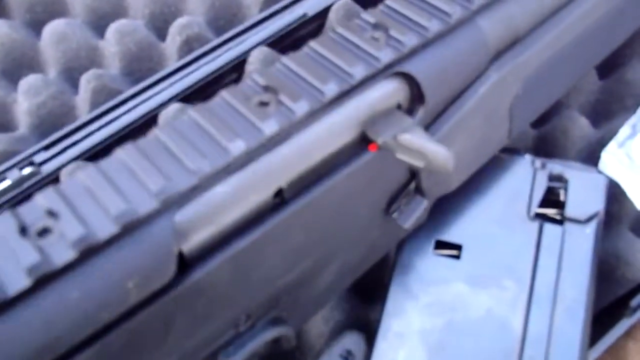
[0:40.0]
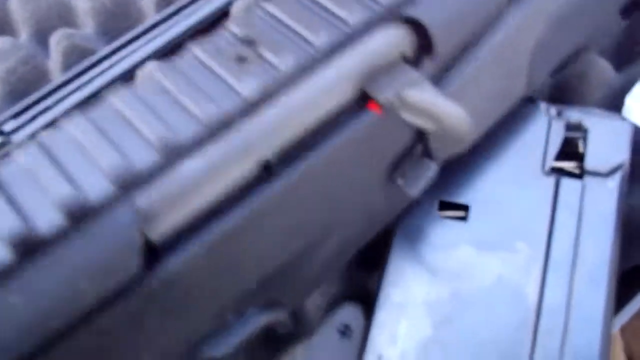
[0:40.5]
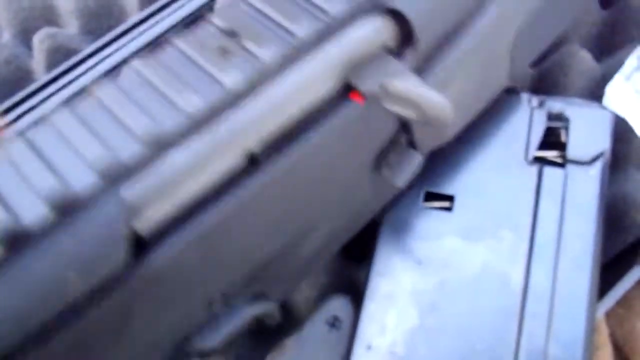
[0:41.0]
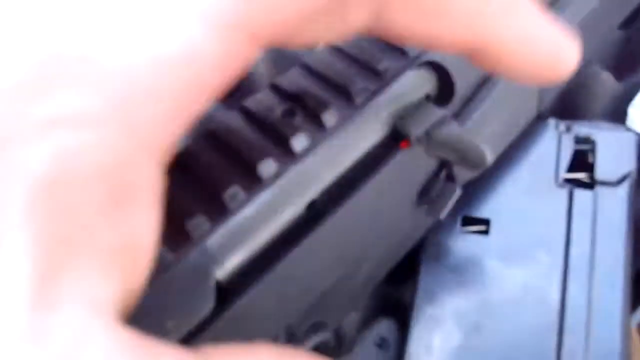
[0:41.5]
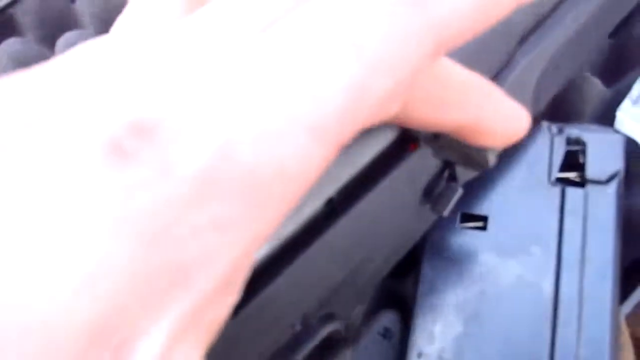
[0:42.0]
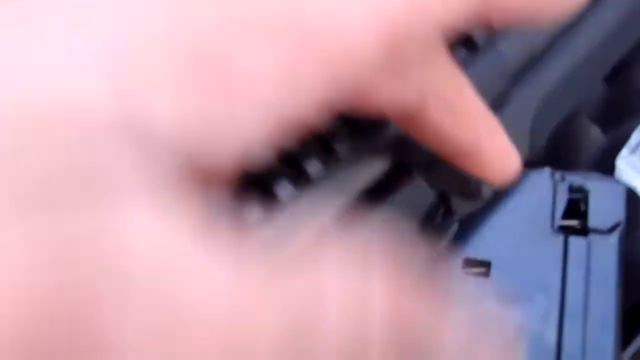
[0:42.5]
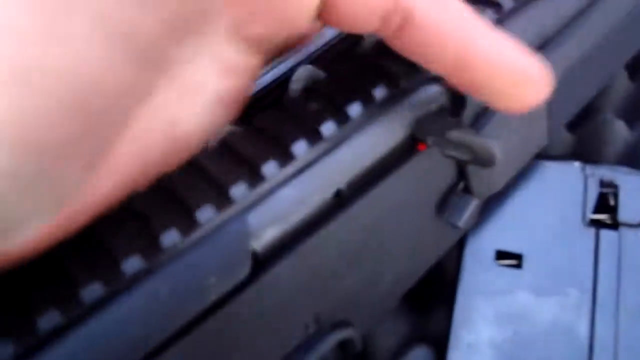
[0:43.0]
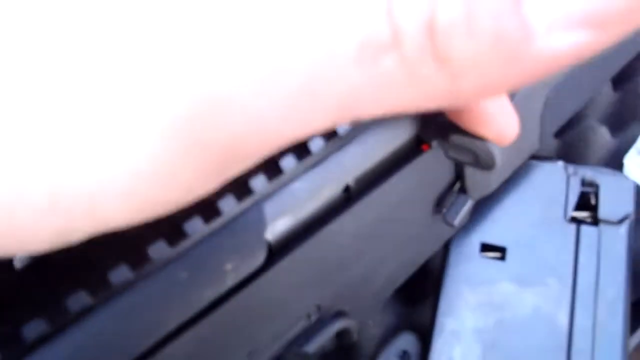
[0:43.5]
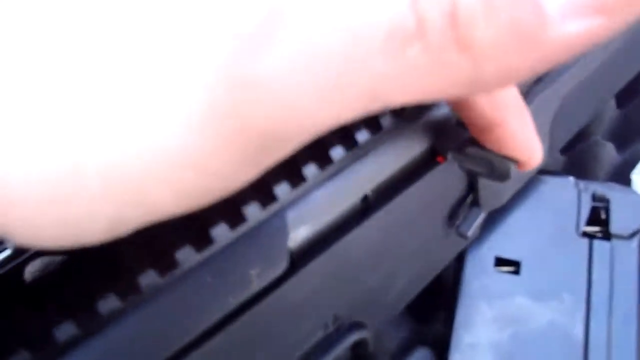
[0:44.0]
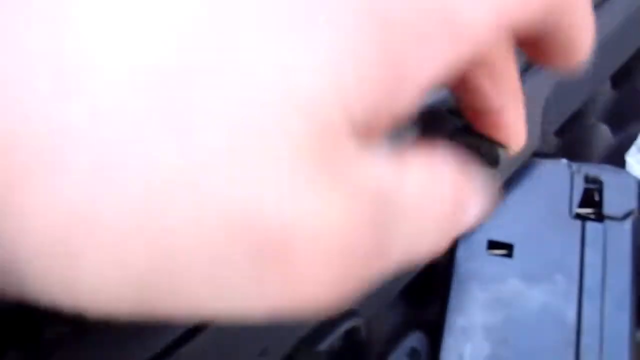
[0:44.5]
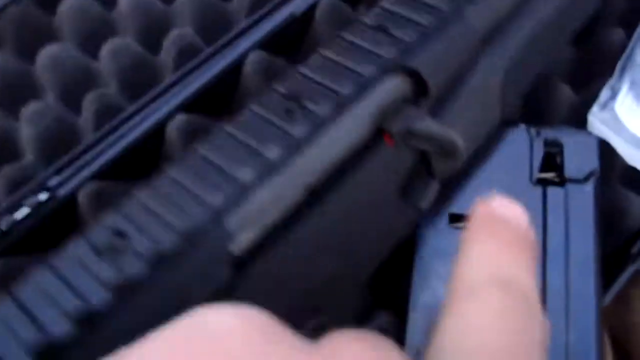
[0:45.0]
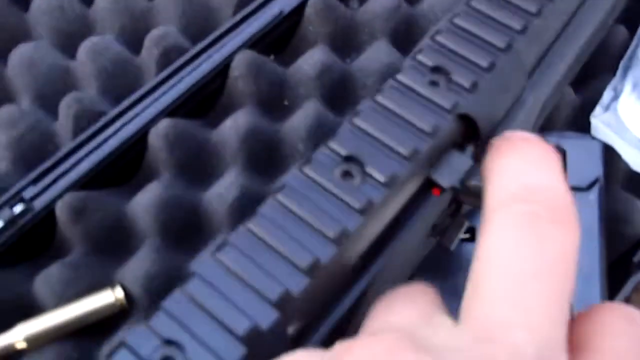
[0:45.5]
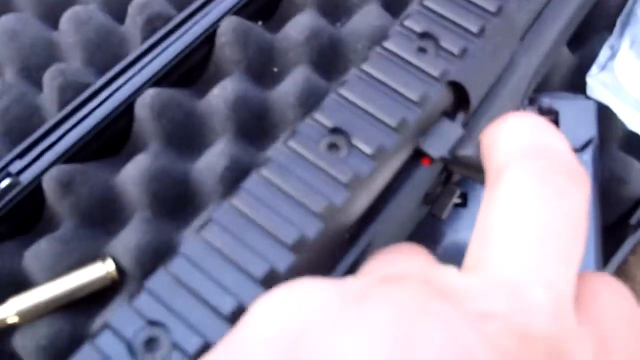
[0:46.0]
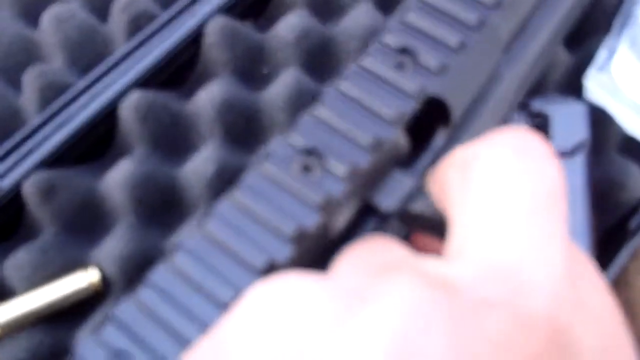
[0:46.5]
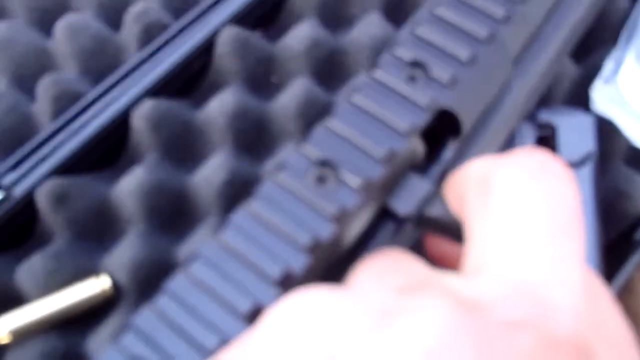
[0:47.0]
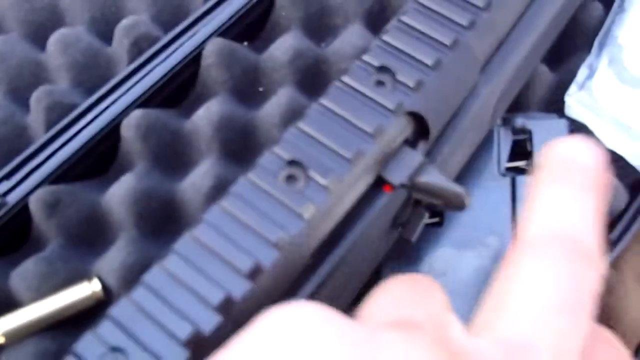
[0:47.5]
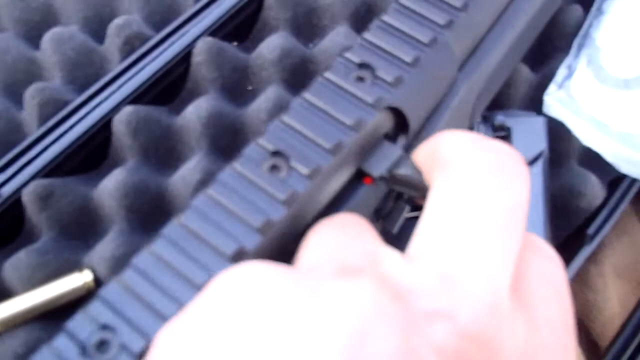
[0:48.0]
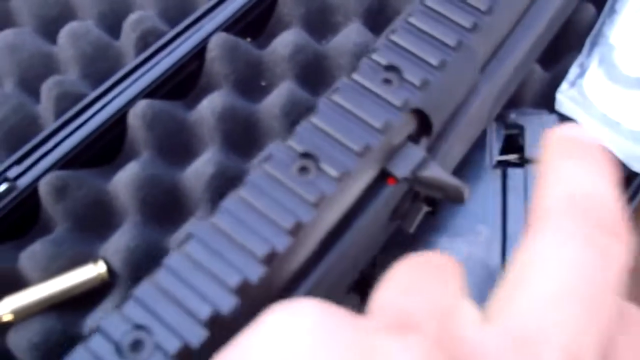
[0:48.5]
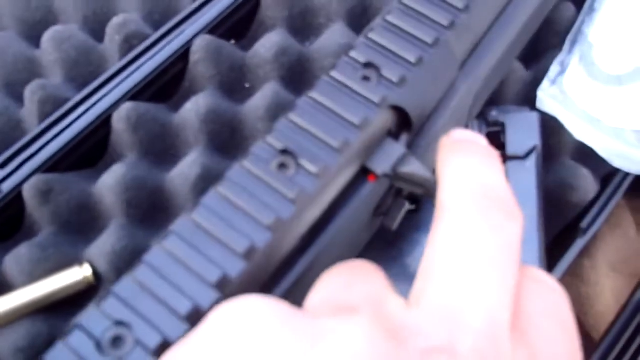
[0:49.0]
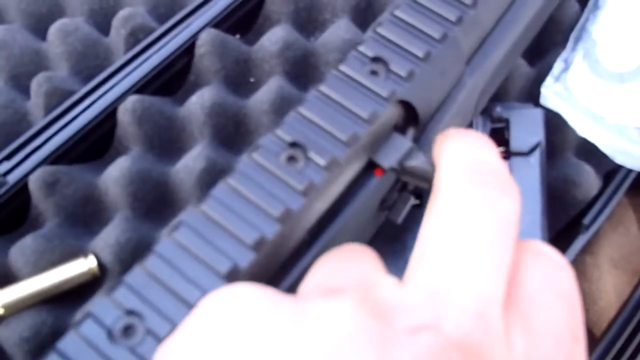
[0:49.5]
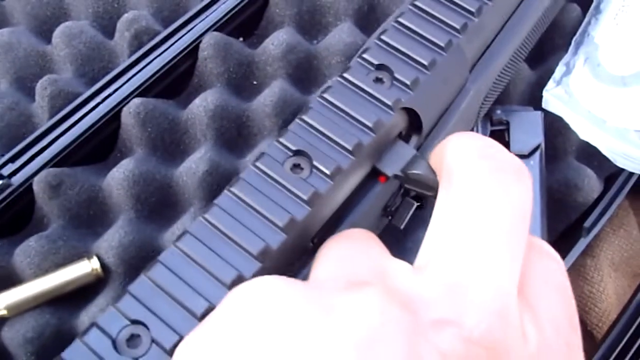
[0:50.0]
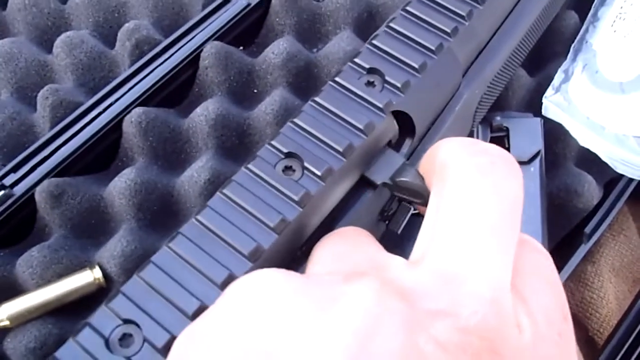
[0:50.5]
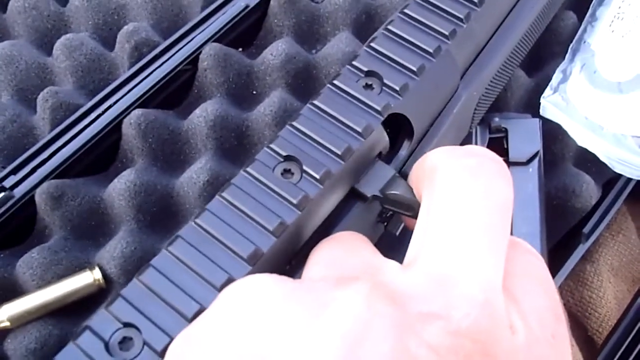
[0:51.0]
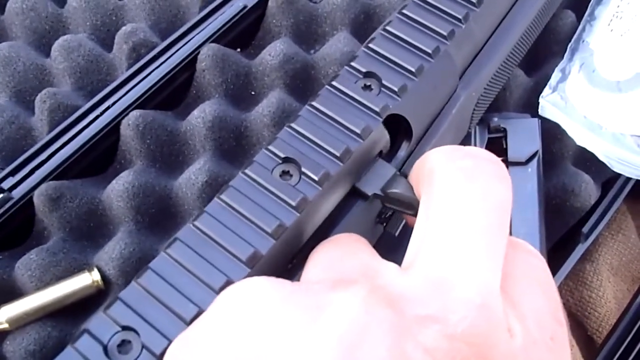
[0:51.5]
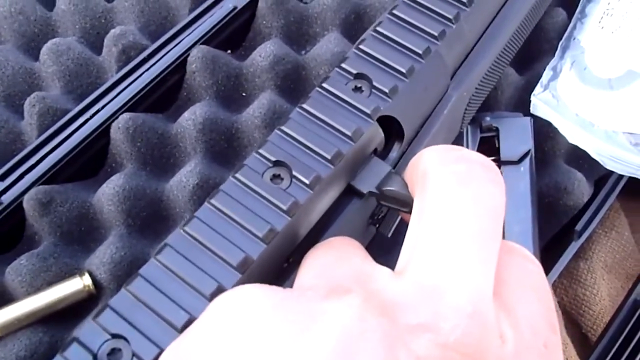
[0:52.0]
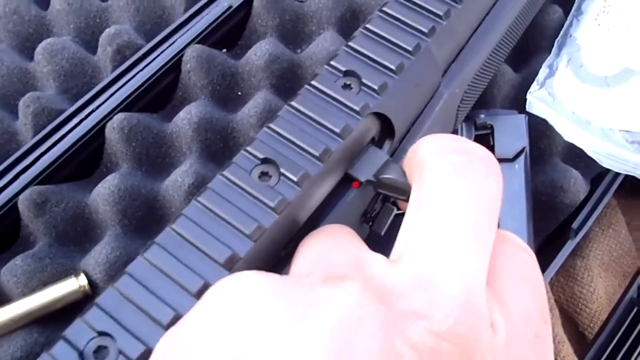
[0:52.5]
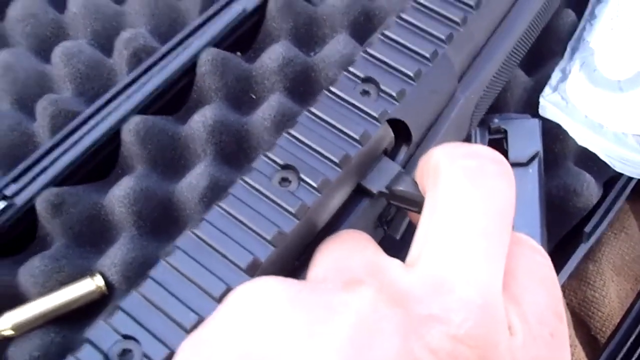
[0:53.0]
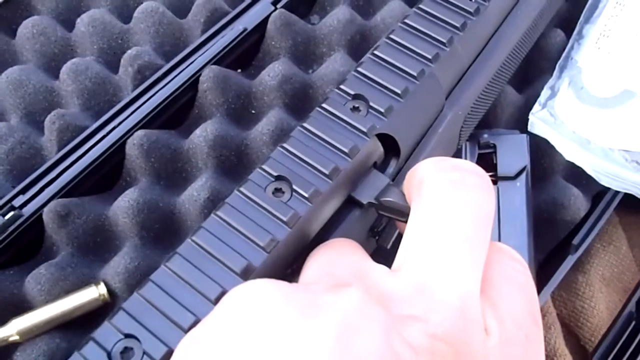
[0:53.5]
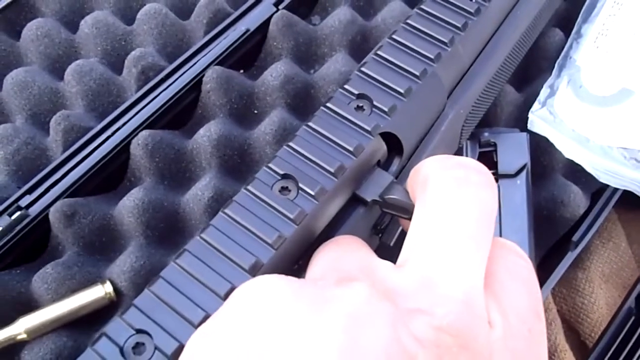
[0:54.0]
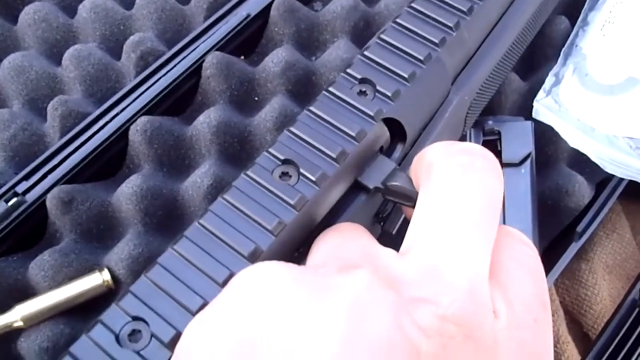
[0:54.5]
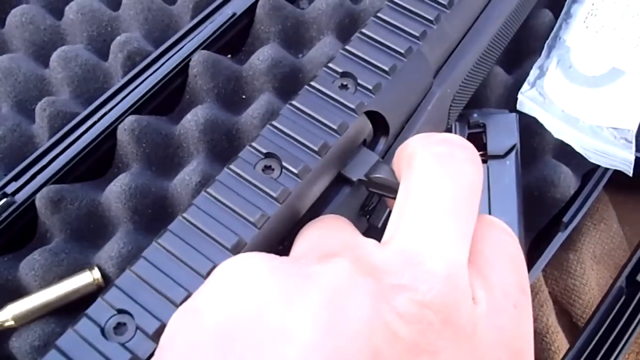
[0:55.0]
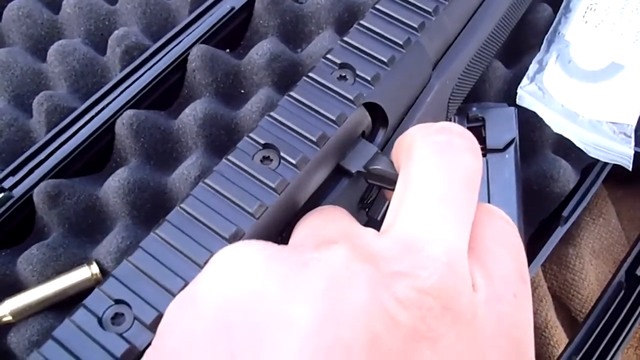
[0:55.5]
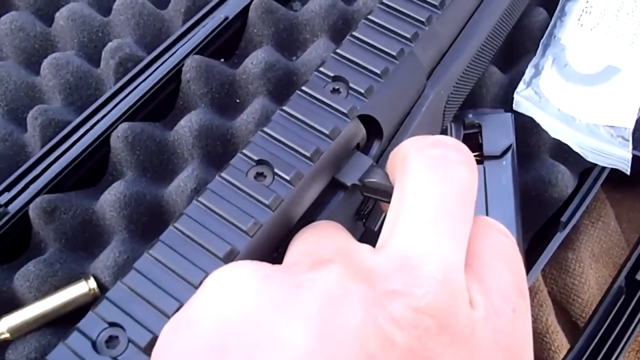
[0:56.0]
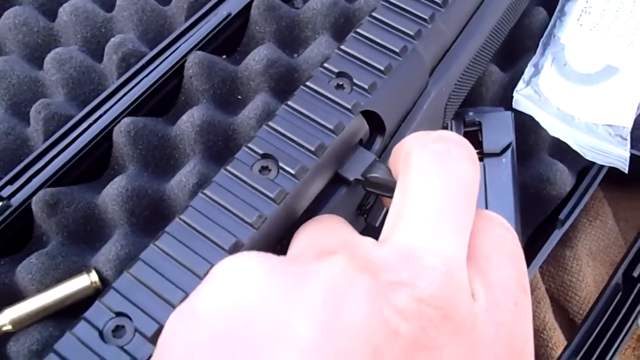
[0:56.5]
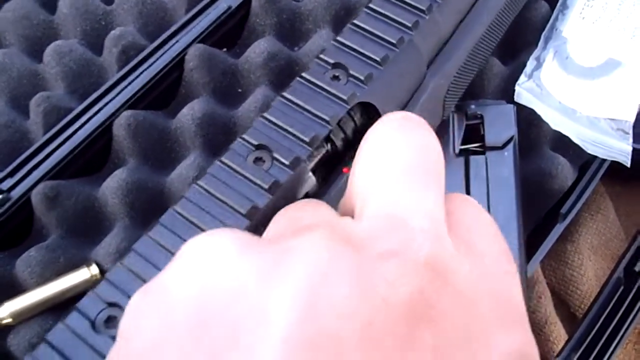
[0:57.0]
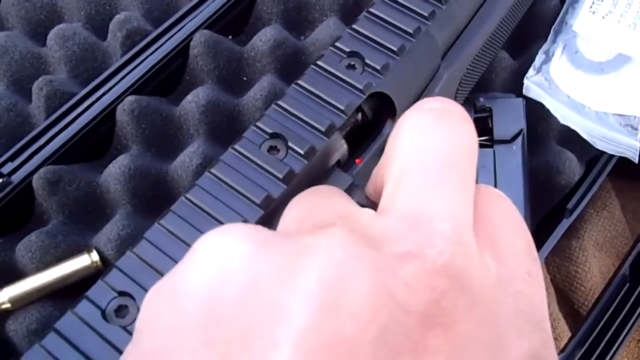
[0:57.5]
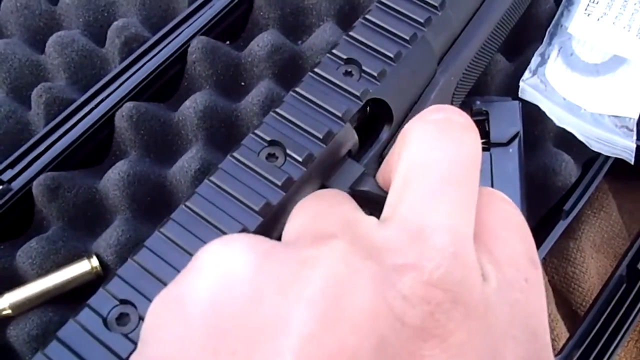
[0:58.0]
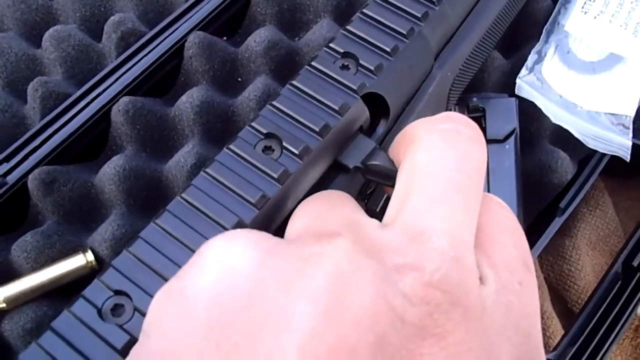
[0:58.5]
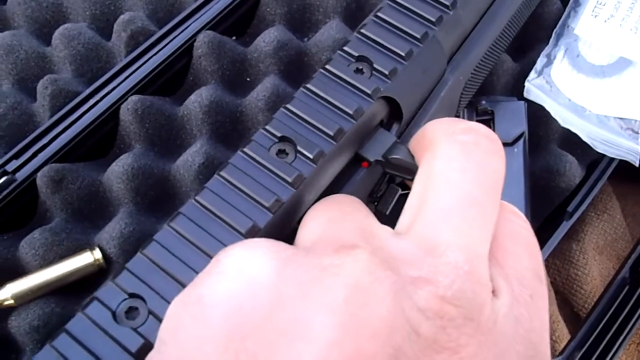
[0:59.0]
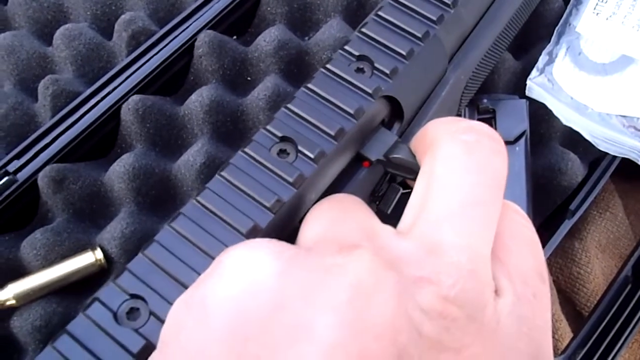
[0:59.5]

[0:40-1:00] The man picks up the gun to show the firing chamber and slowly cocks it back, showing the mechanism. He is apparently showing how the gun works. There is something of unclear model next to the gun. He uses his middle finger to cock the gun back multiple times.